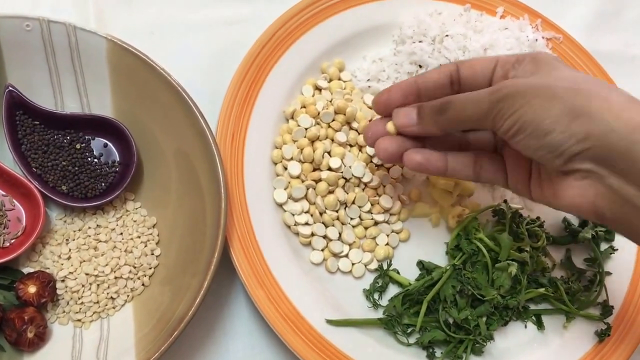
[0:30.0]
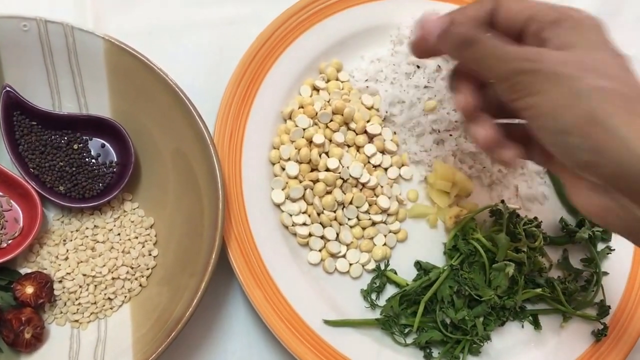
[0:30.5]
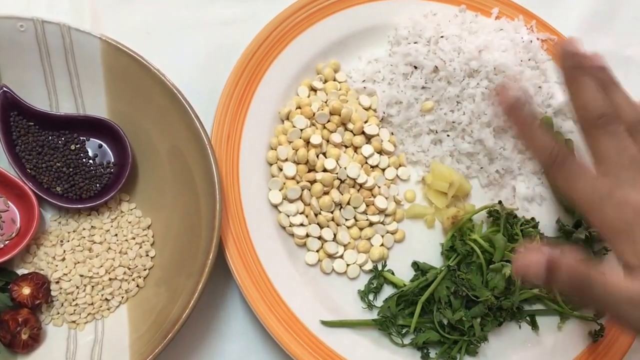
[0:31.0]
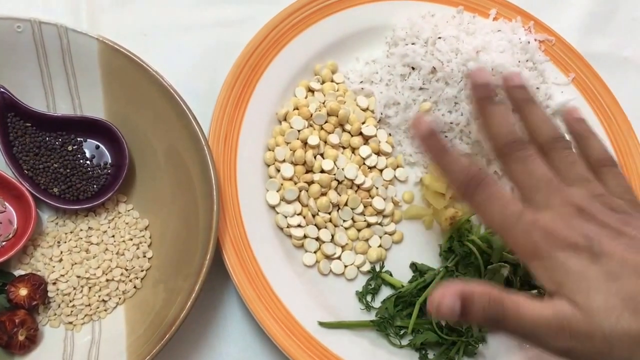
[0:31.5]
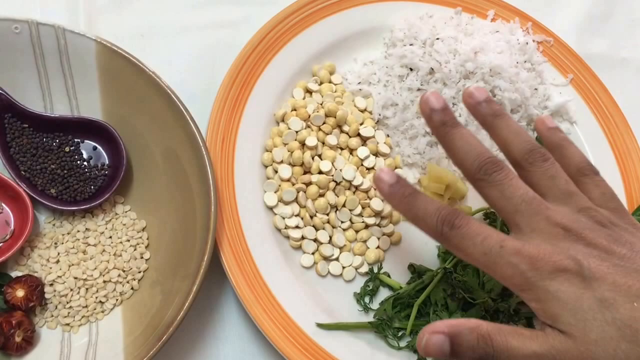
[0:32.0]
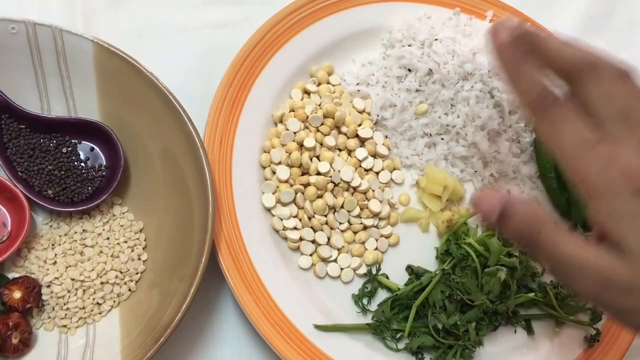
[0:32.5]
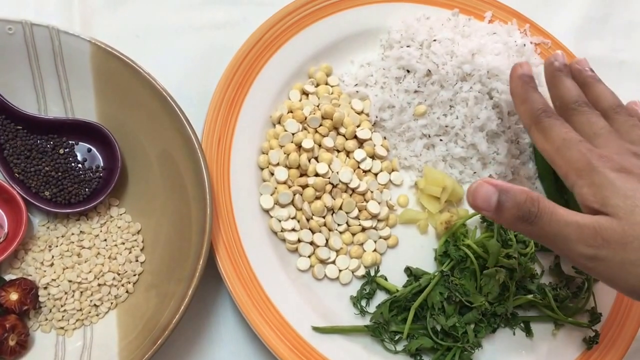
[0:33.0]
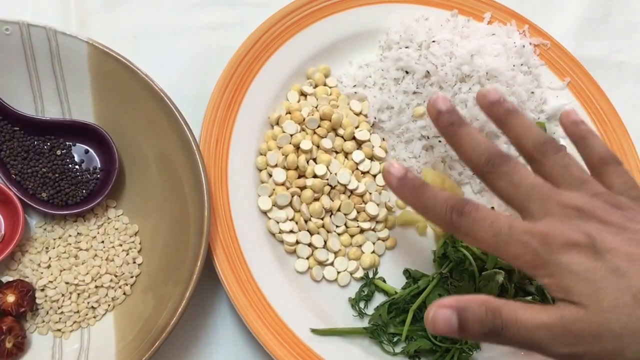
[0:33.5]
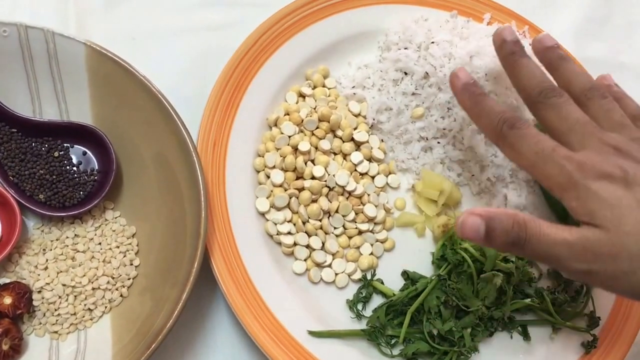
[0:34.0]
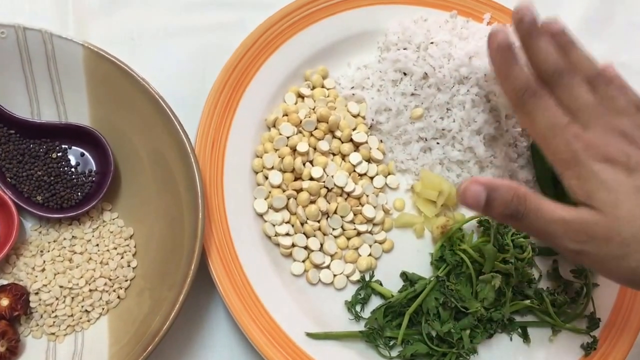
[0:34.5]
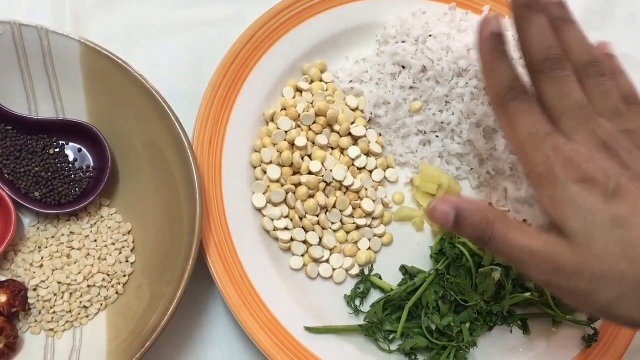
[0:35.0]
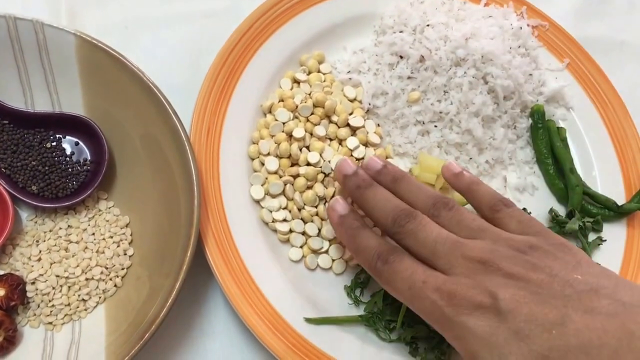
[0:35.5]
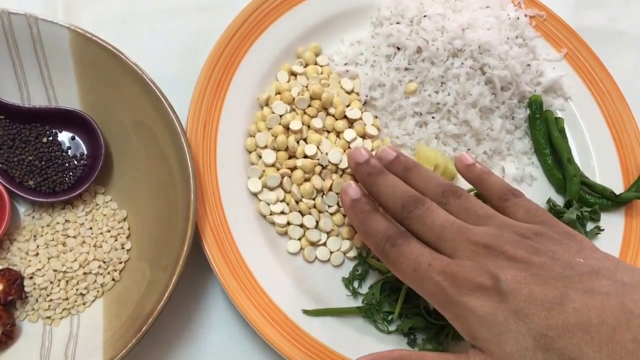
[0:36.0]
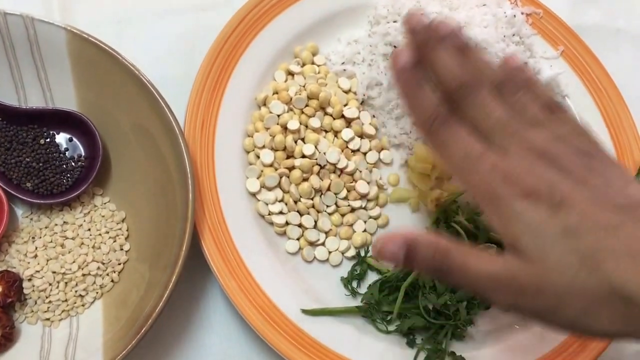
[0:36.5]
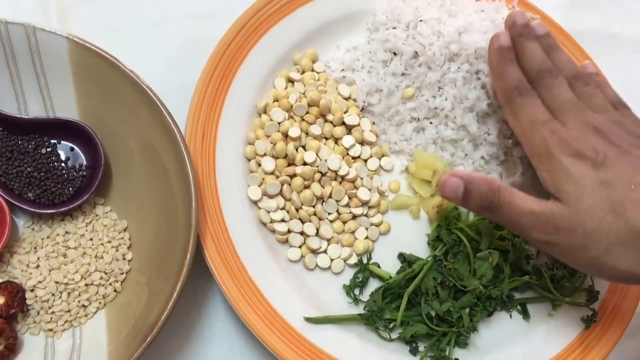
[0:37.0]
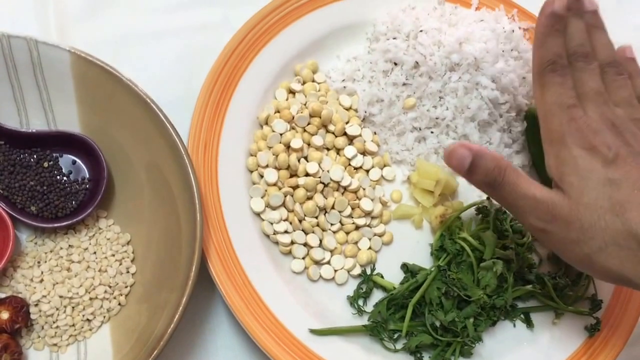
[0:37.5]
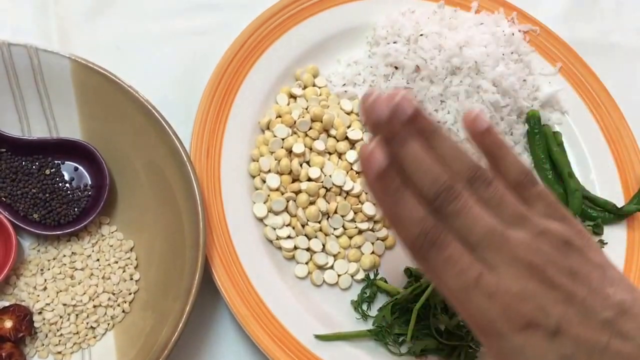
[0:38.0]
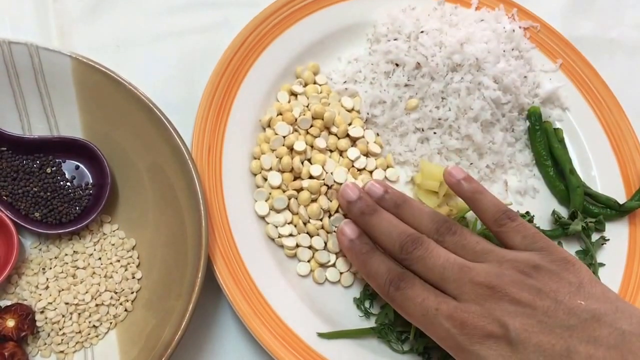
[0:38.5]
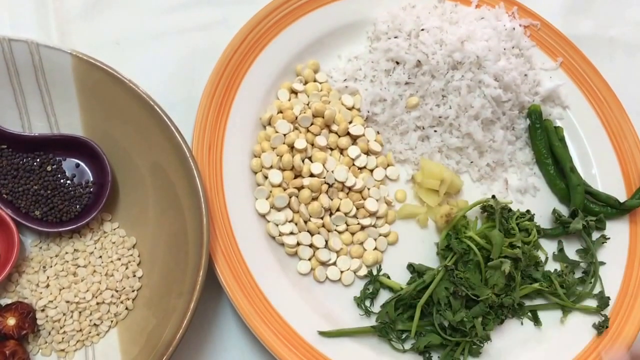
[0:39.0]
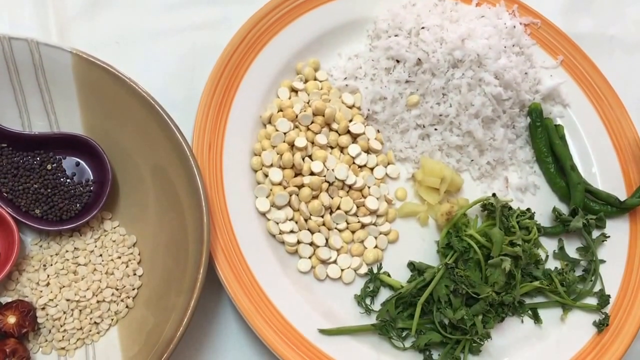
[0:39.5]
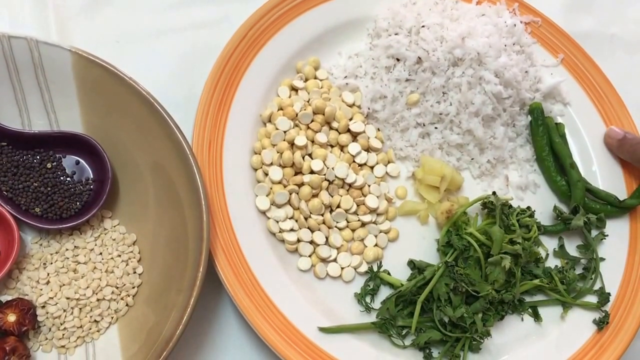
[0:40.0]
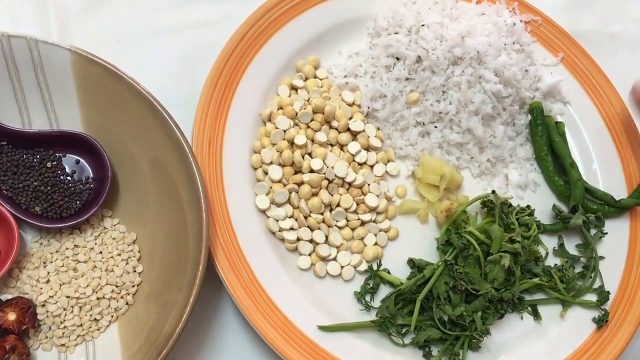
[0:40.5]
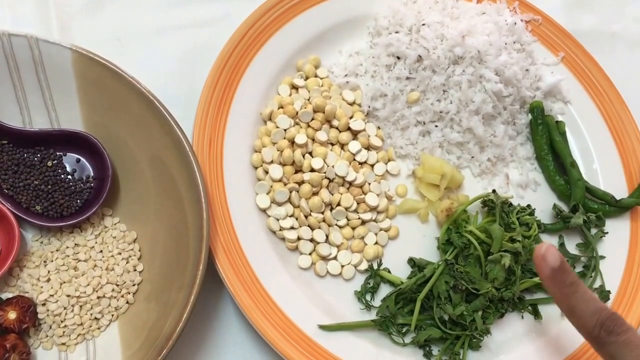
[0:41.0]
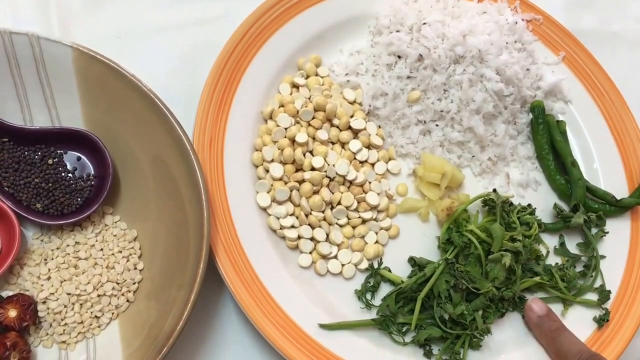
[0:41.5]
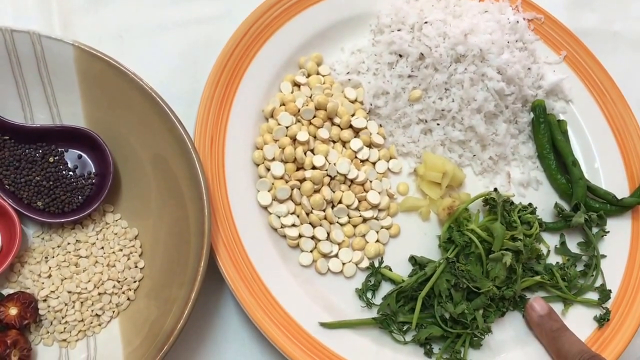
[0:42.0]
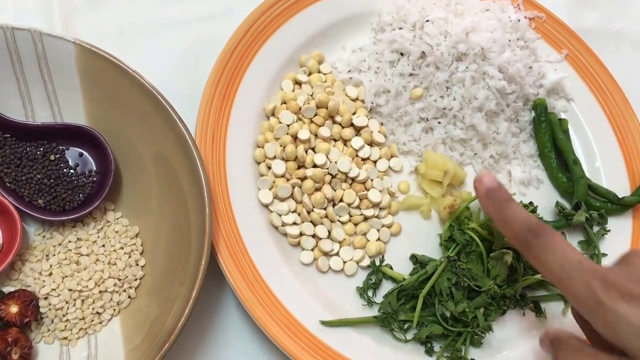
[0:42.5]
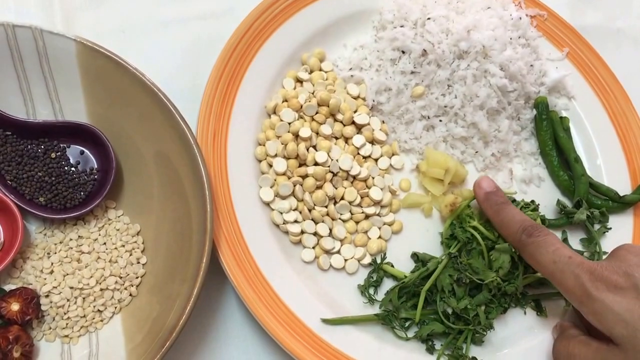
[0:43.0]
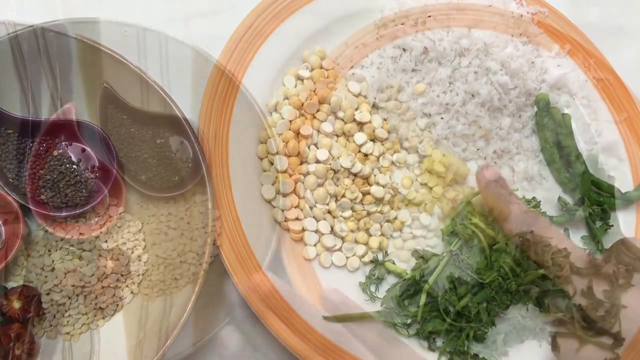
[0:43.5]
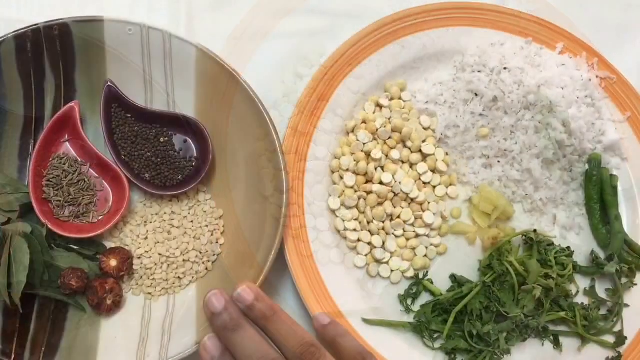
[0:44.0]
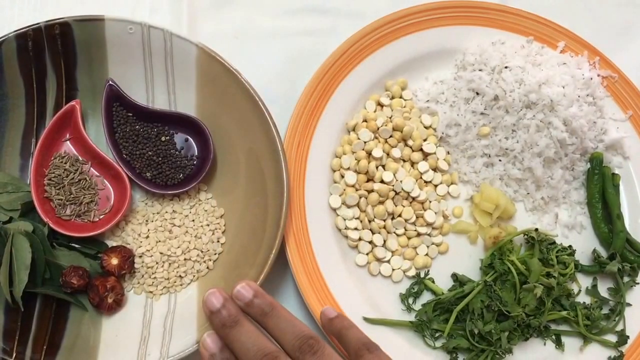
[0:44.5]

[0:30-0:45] The ingredients for a coconut coriander chutney, possibly a mint chutney though no mint is really visible, are spread out over two plates, probably four to five ingredients on each. They look fresh apart from the dried ingredients such as the peppercorns and lentils. There appears to be some ginger, there is coconut, and maybe coriander, along with something that looks almost like green beans but may be a green onion, scallion or chive. The ingredients are laid out so that they are complementary but still separate.